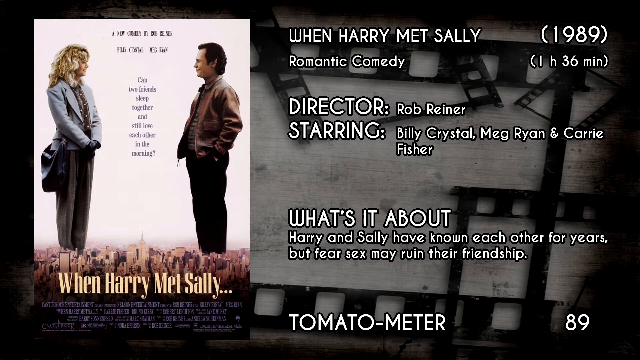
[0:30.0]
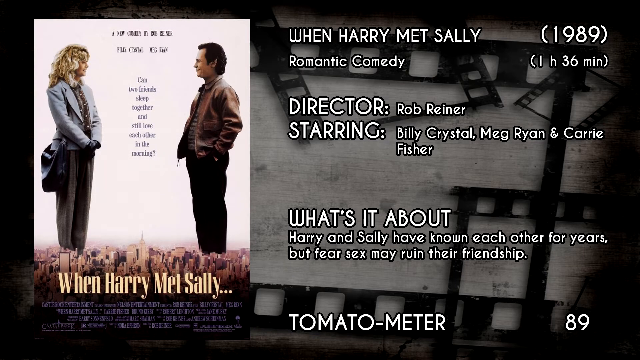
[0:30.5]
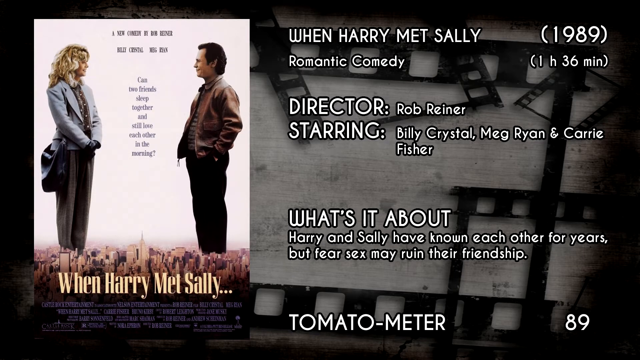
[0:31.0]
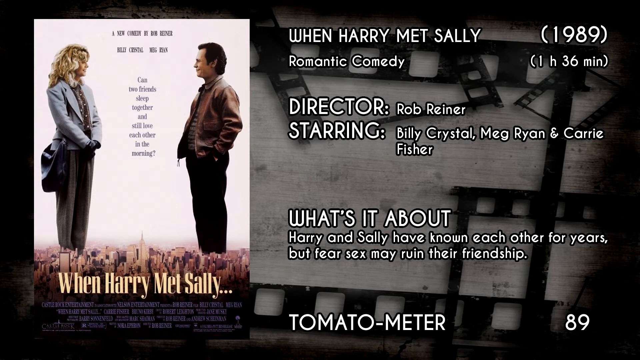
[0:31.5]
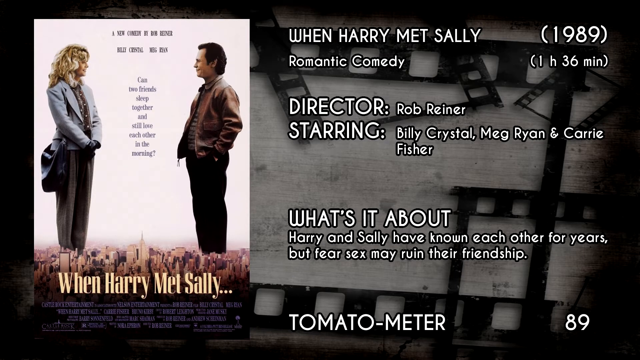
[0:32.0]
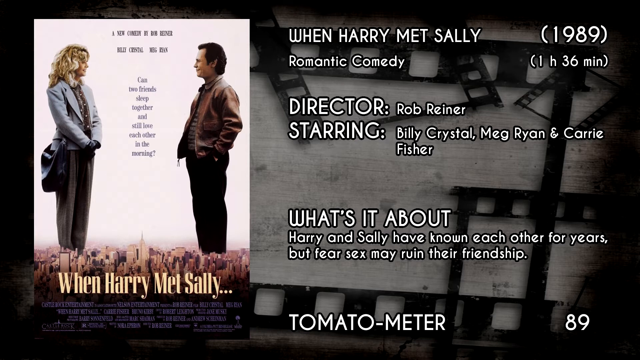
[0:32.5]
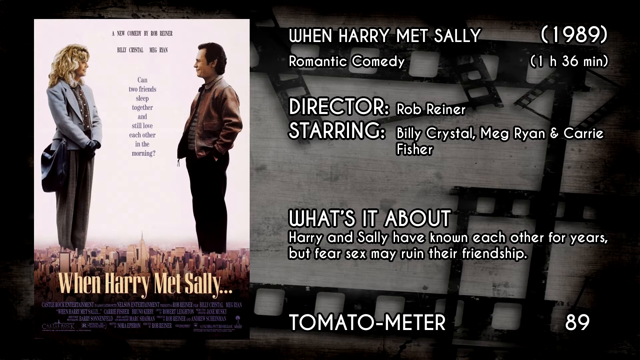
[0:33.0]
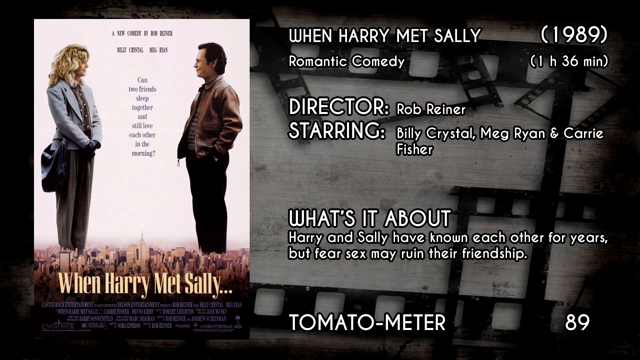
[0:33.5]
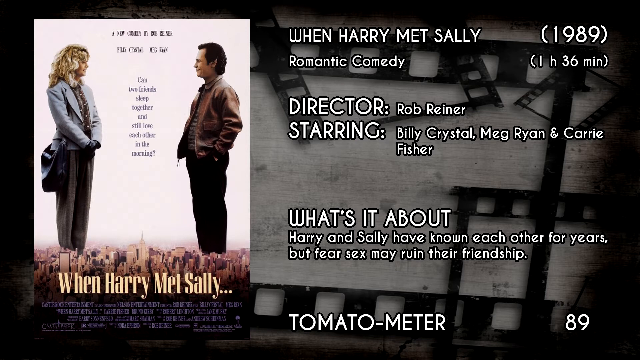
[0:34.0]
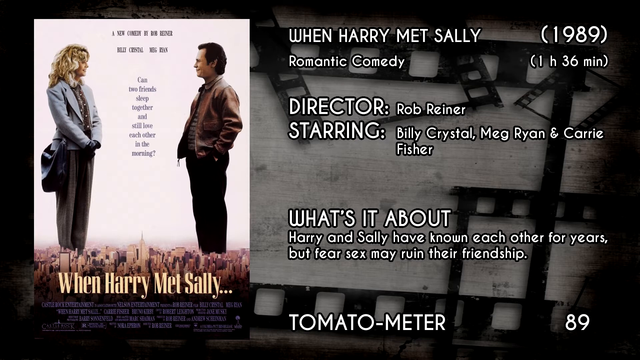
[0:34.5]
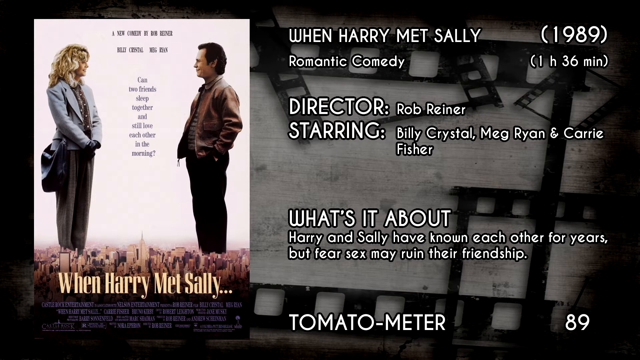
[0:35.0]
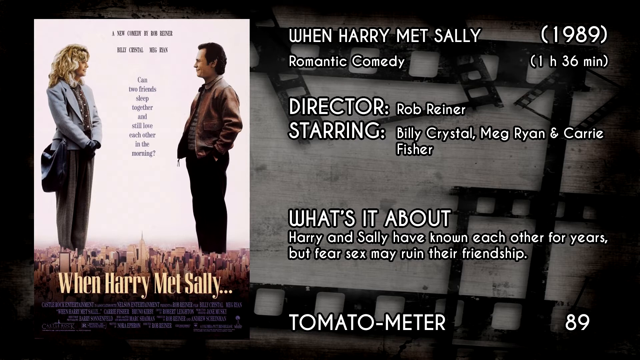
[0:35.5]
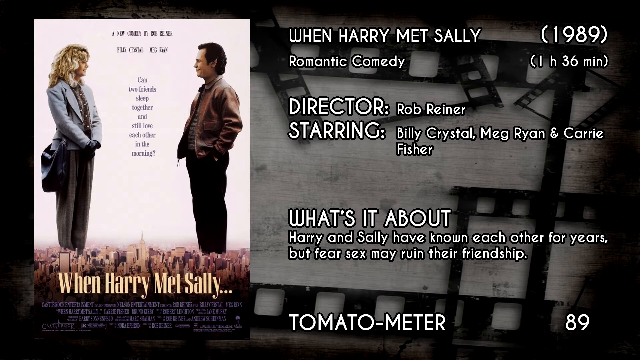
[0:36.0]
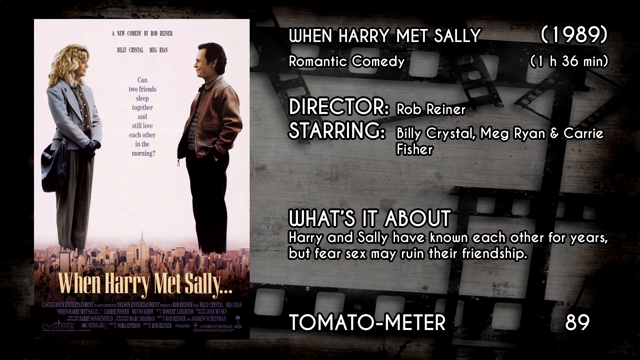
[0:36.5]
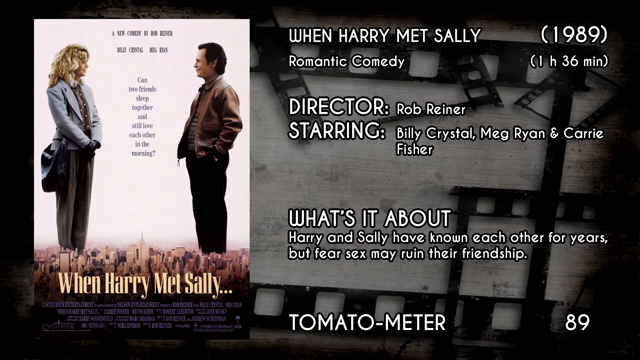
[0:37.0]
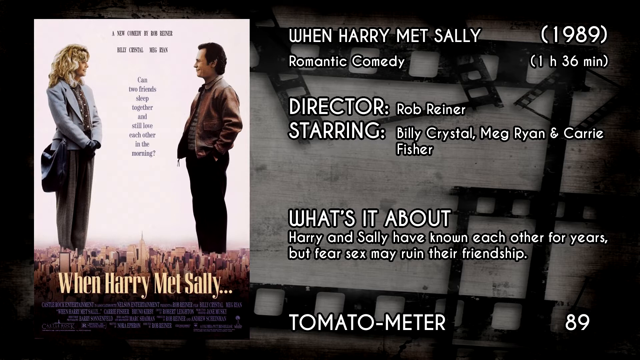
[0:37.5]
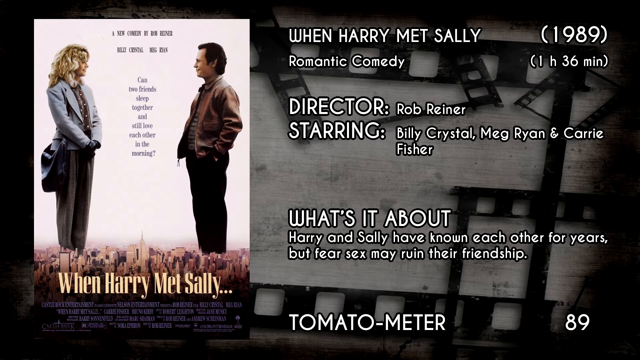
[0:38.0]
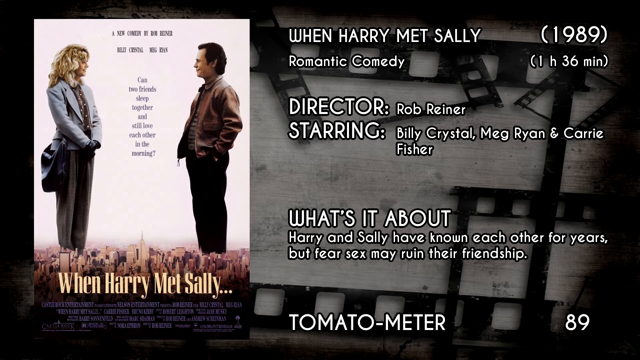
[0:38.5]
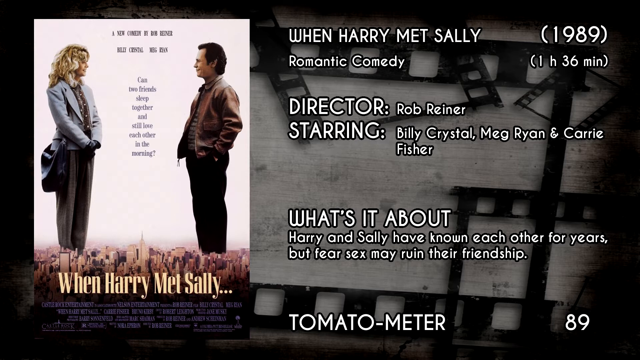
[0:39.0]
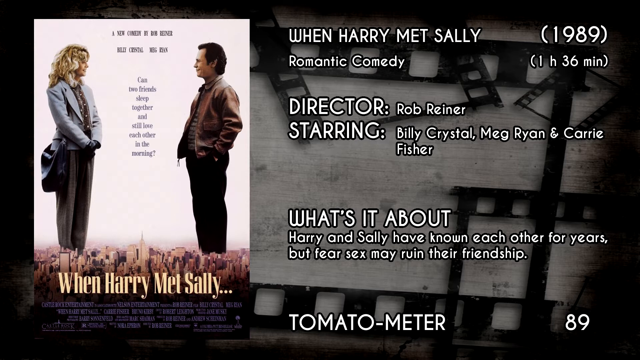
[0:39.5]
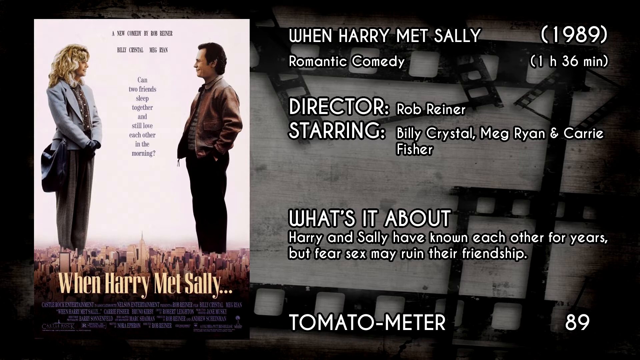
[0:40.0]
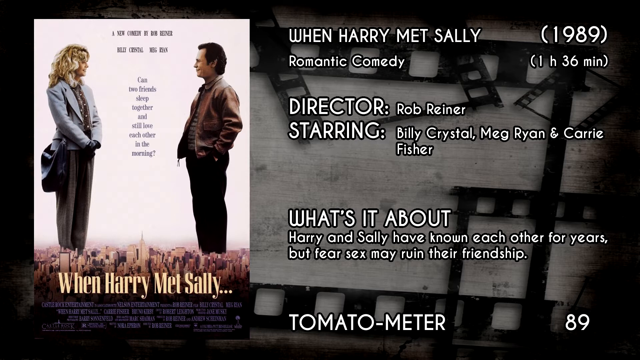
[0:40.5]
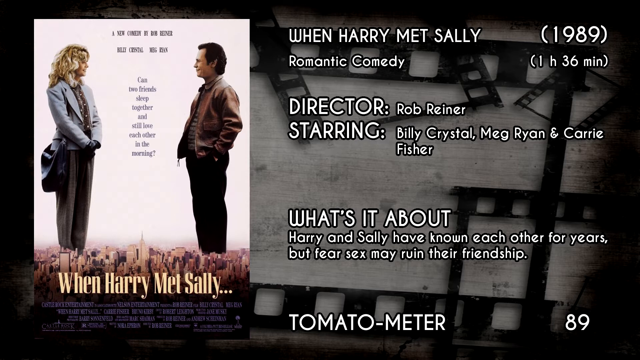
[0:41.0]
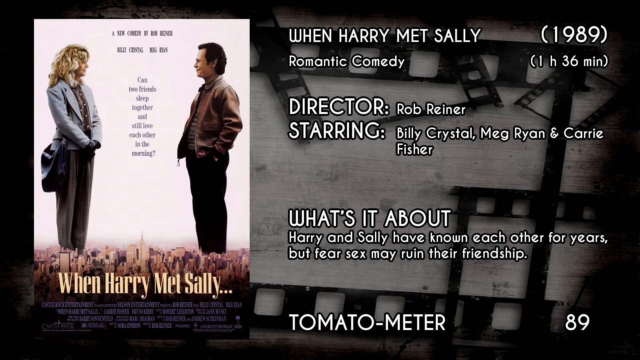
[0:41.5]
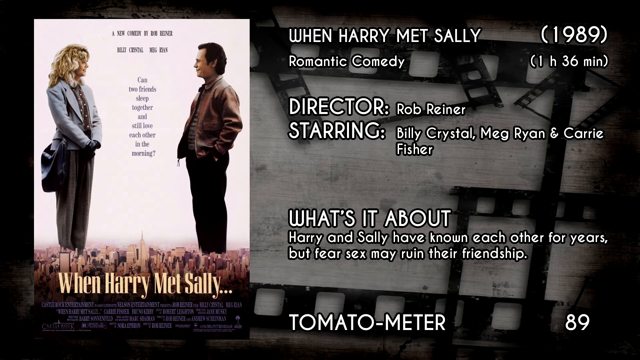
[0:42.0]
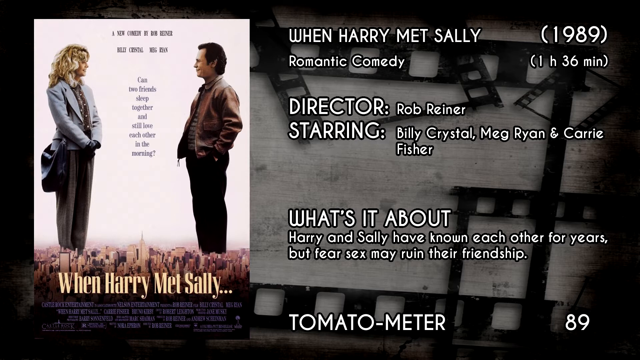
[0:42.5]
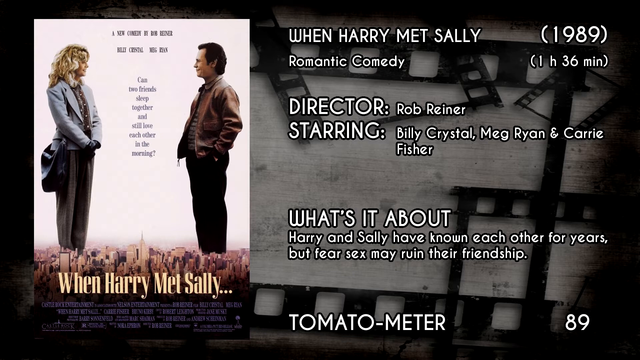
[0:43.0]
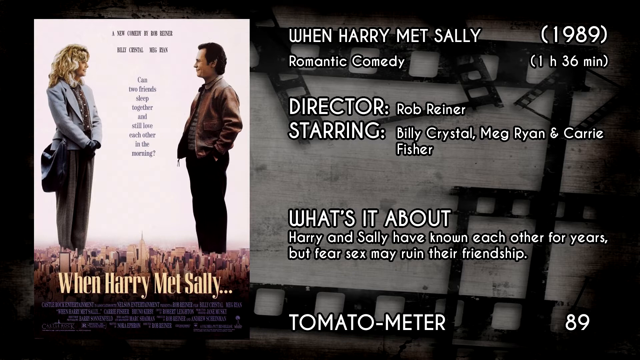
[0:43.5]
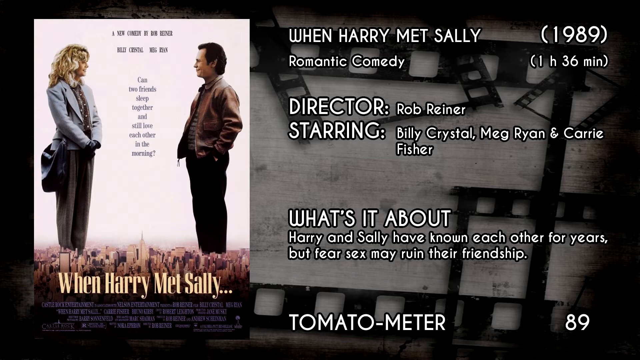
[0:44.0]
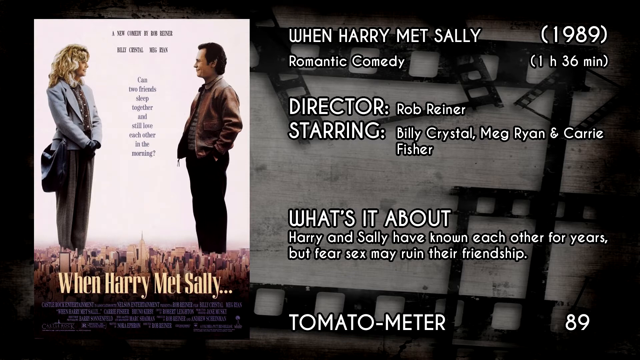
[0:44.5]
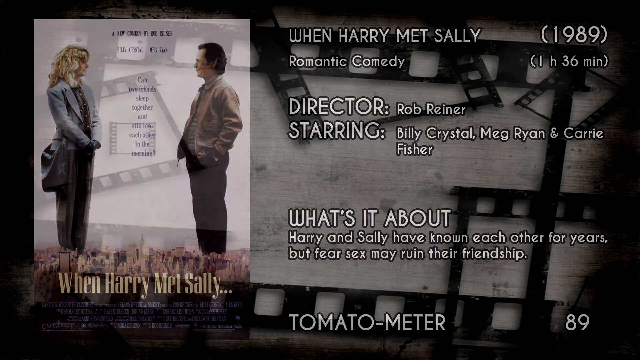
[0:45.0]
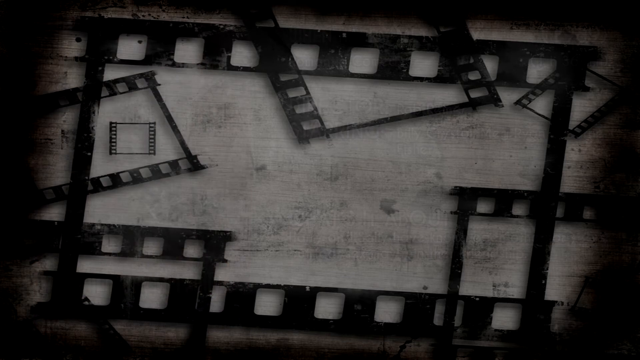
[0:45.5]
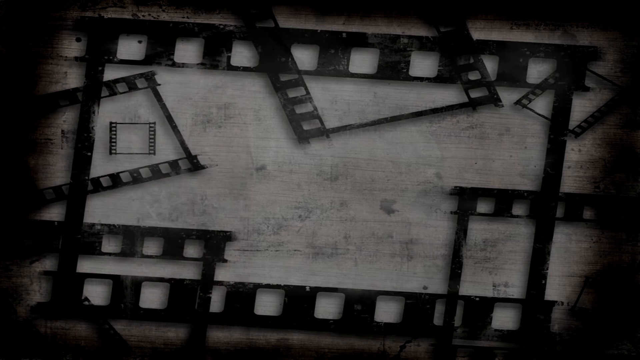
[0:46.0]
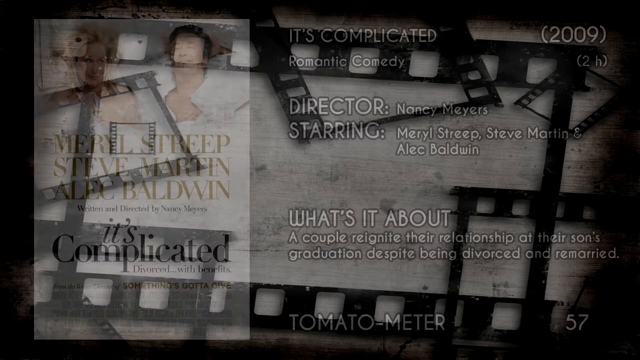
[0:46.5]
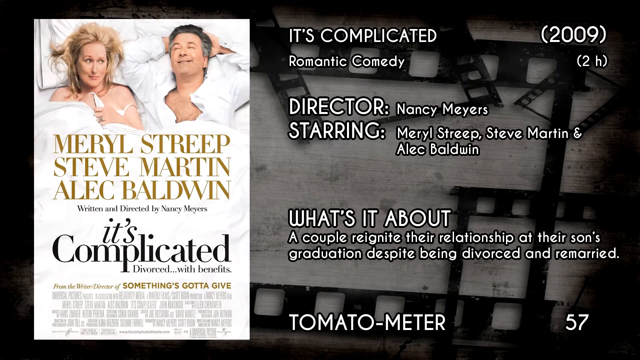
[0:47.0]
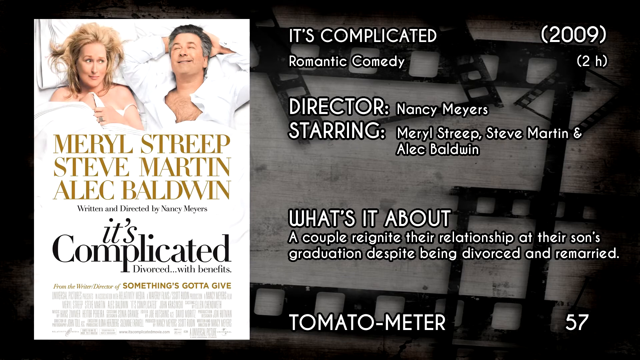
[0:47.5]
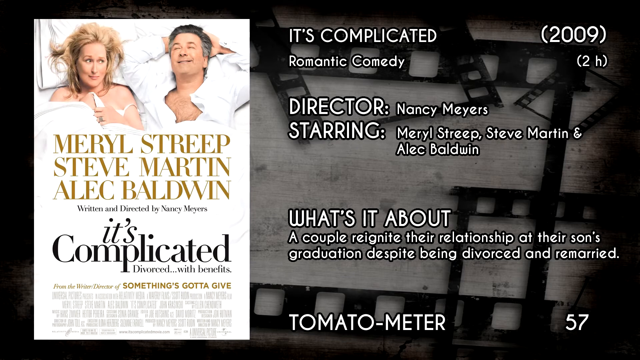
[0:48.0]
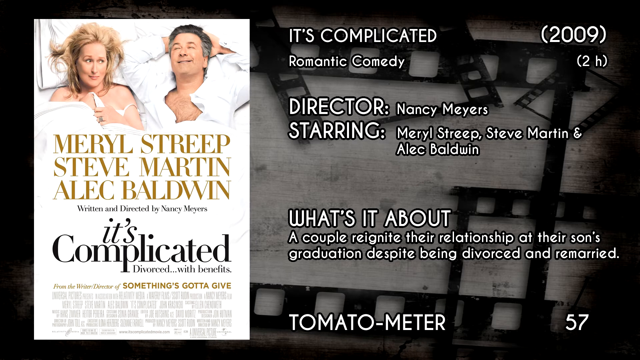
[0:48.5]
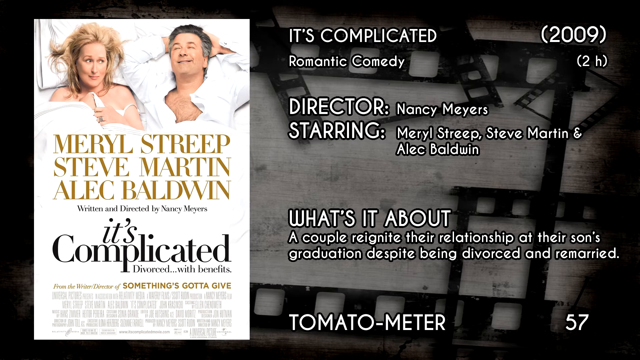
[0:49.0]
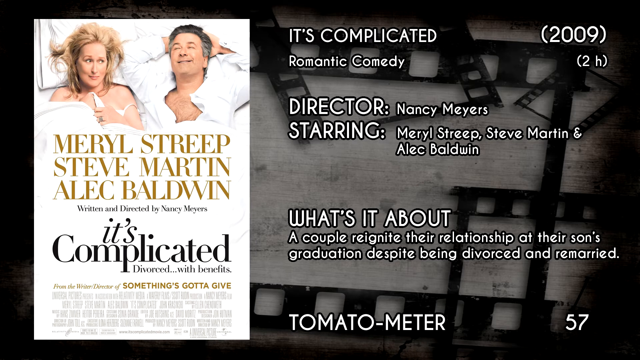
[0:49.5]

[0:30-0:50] Another film appears on the screen: When Harry Meets Sally, from 1989, a romantic comedy 1 hour and 36 minutes long, directed by Rob Reiner and starring Billy Crystal, Meg Ryan and Carrie Fisher. Its summary reads that Harry and Sally have known each other for years but fear sex may ruin their friendship.